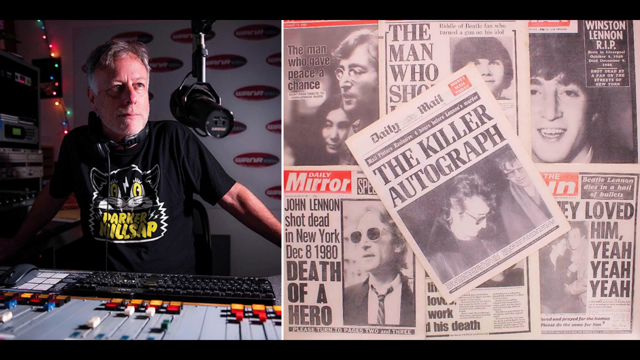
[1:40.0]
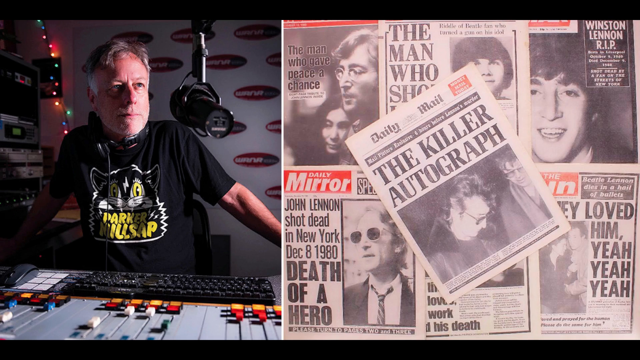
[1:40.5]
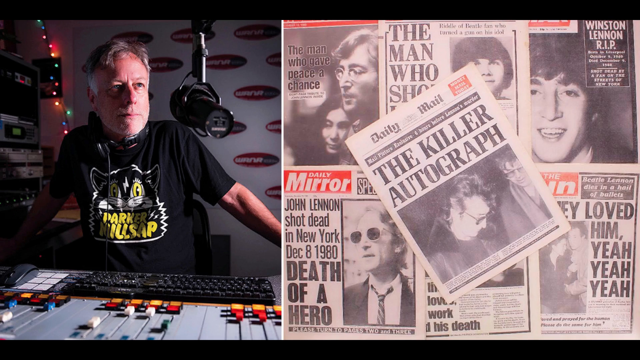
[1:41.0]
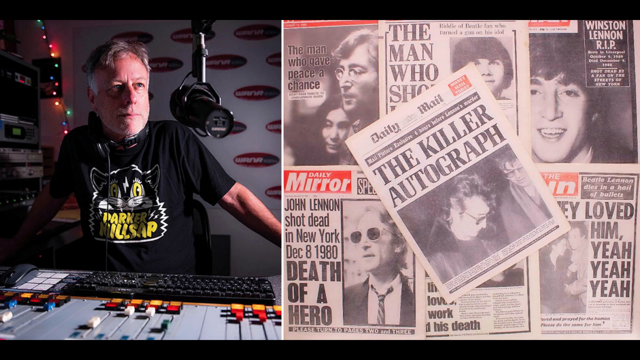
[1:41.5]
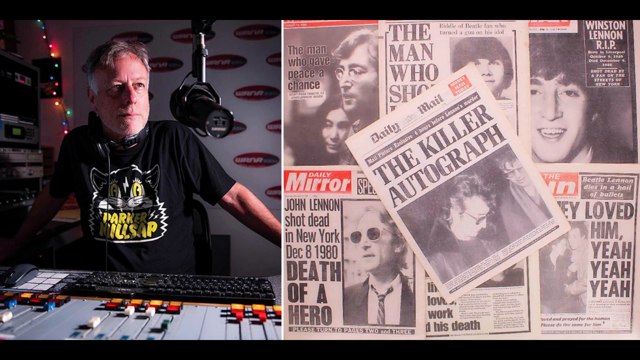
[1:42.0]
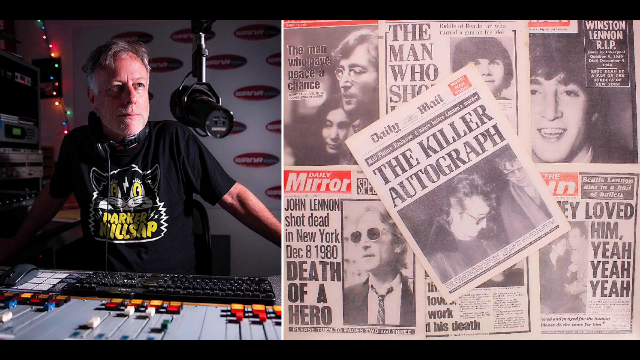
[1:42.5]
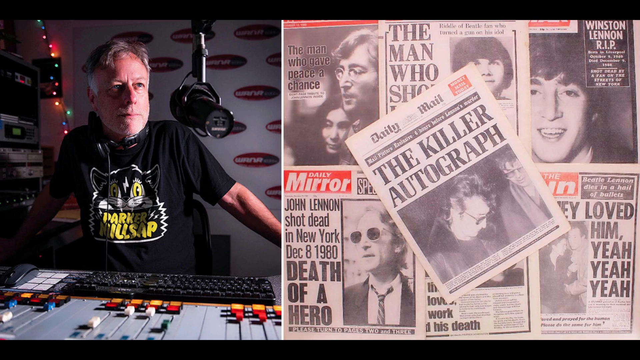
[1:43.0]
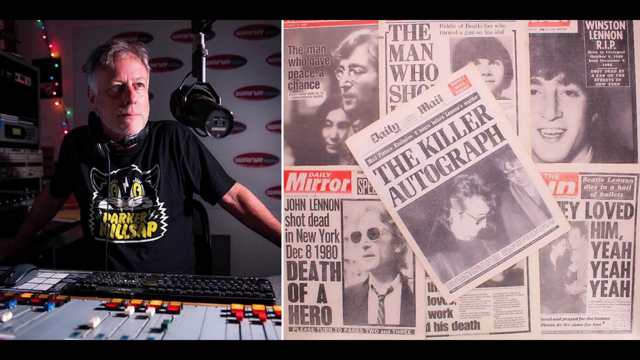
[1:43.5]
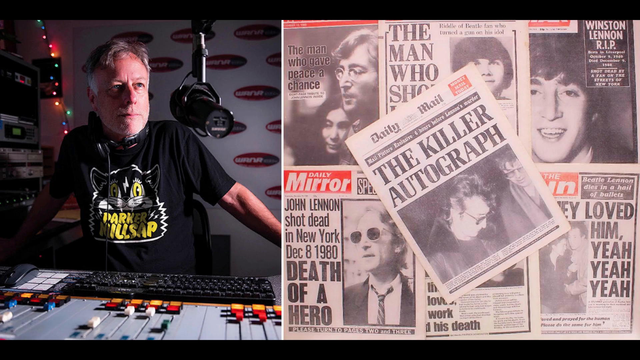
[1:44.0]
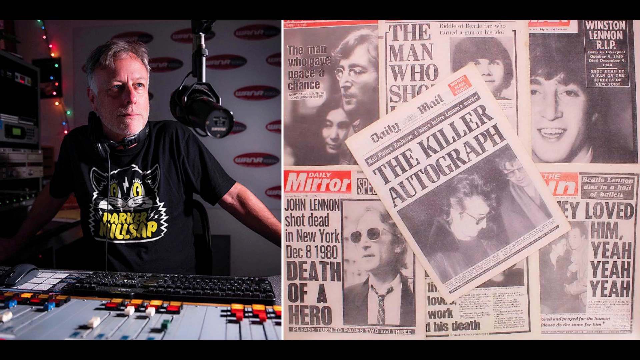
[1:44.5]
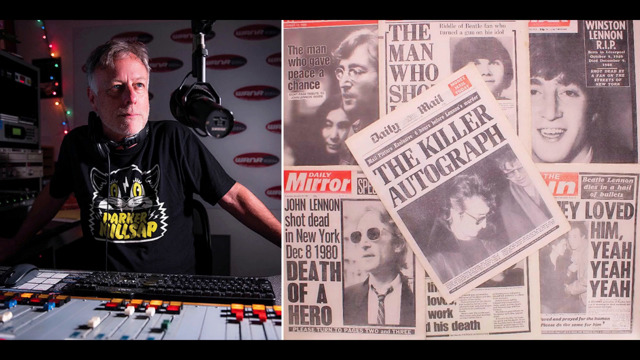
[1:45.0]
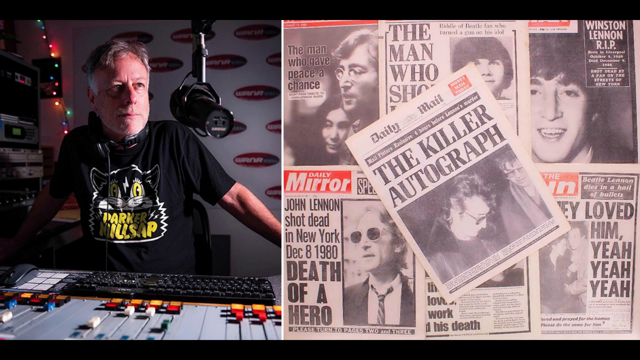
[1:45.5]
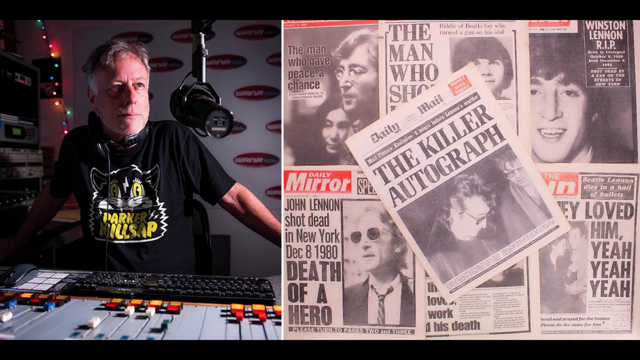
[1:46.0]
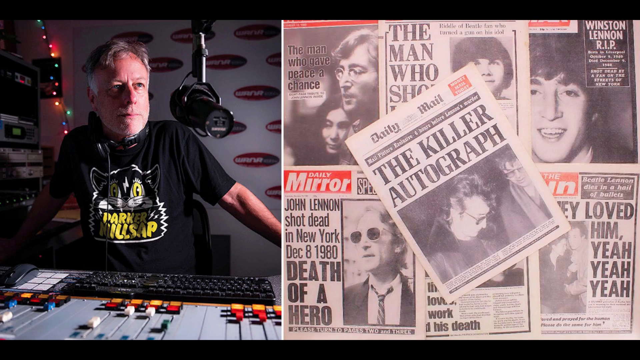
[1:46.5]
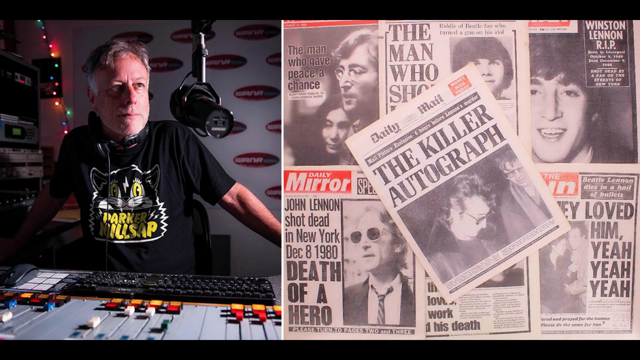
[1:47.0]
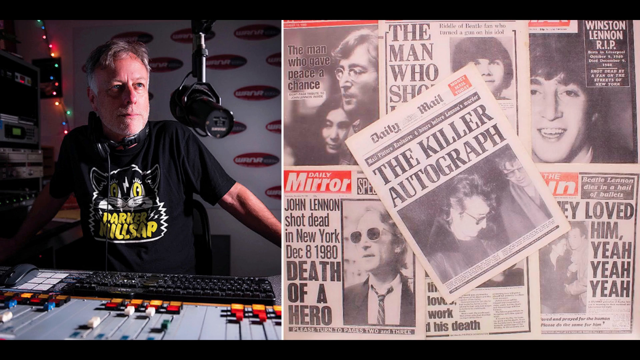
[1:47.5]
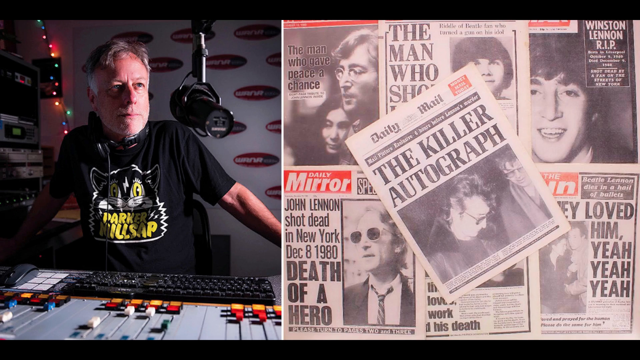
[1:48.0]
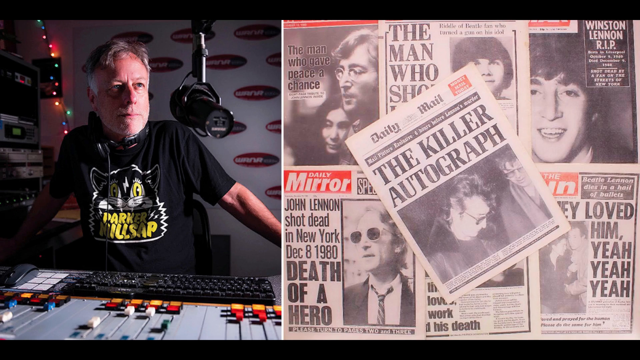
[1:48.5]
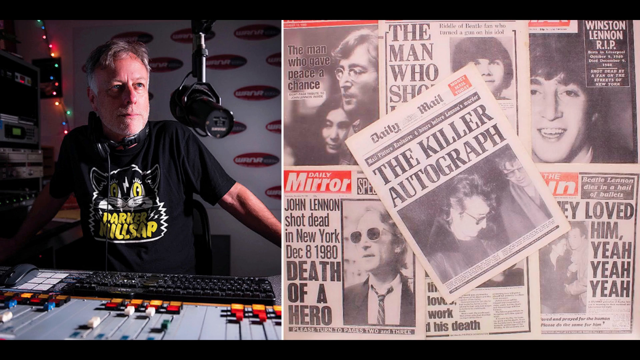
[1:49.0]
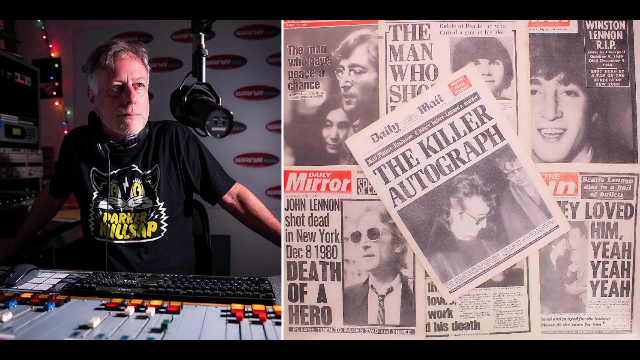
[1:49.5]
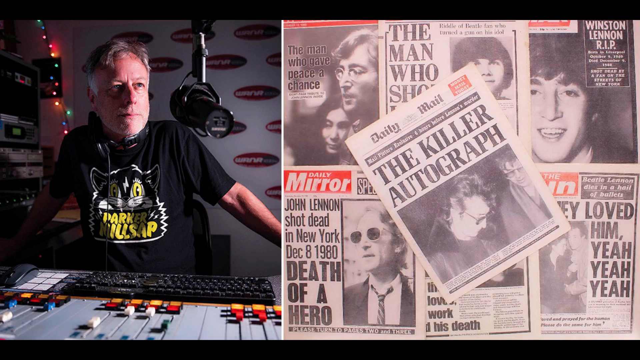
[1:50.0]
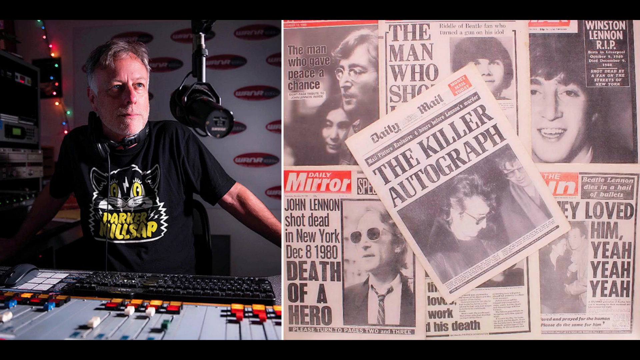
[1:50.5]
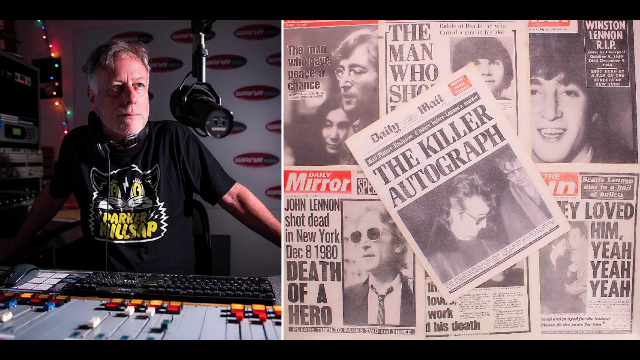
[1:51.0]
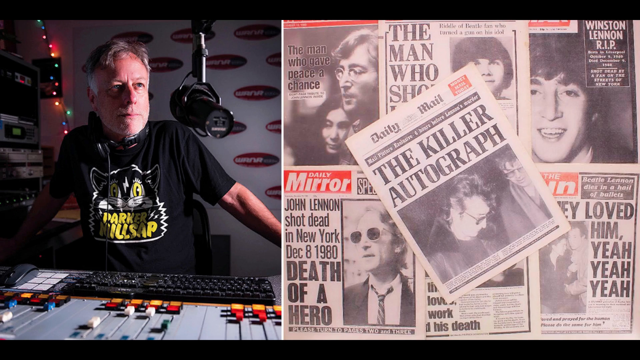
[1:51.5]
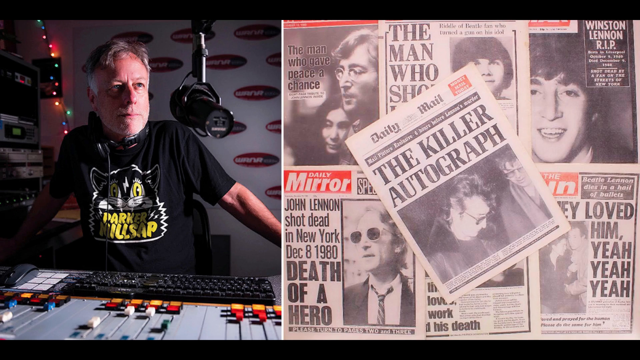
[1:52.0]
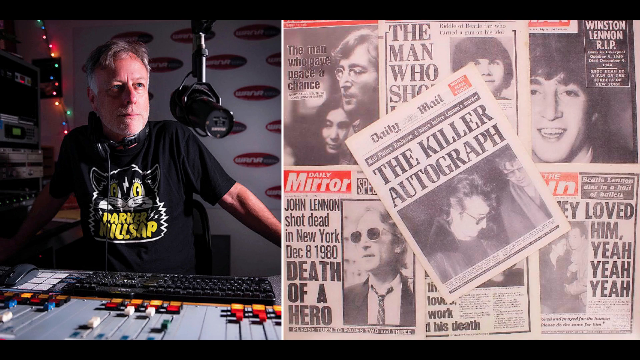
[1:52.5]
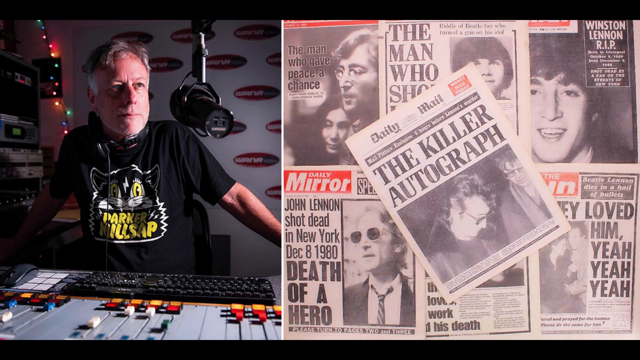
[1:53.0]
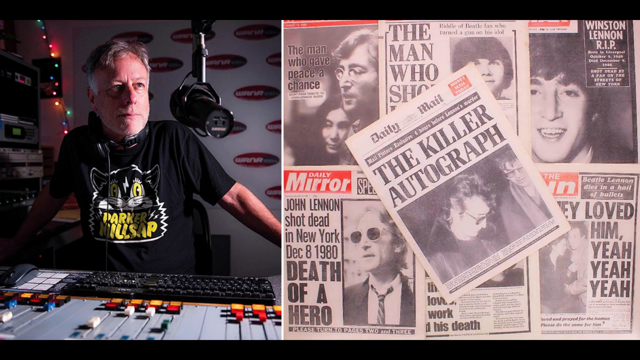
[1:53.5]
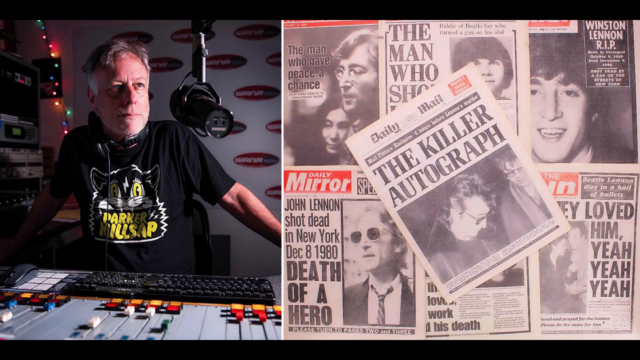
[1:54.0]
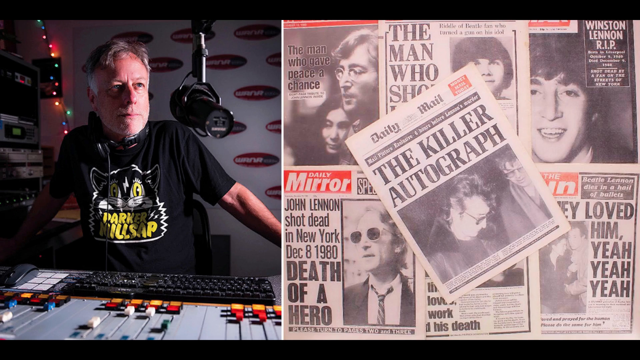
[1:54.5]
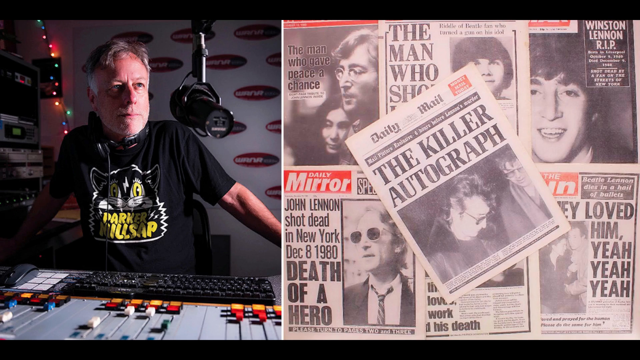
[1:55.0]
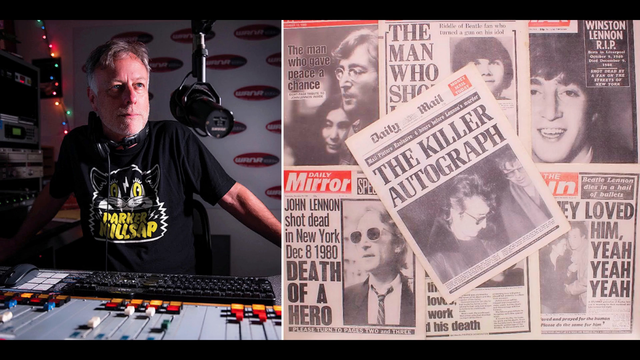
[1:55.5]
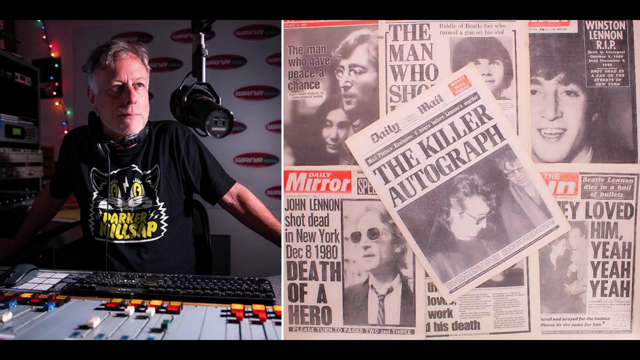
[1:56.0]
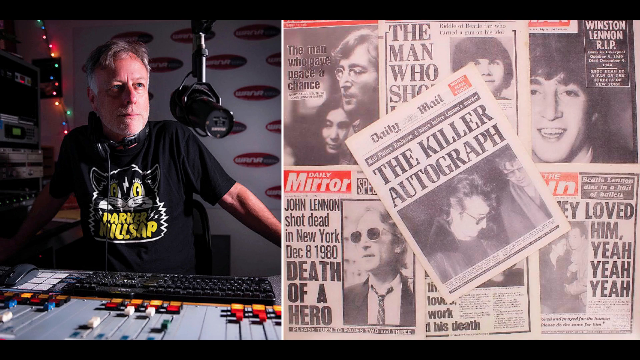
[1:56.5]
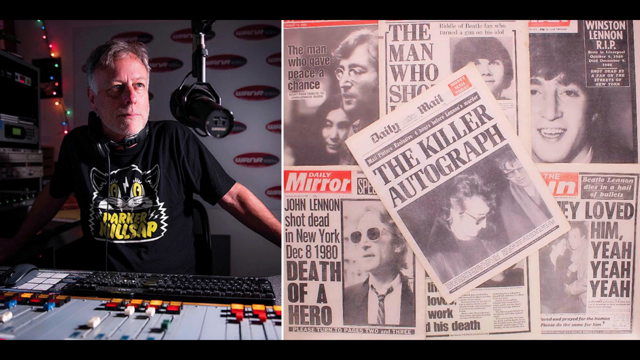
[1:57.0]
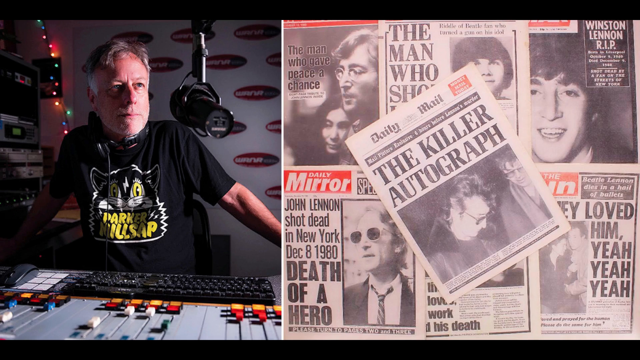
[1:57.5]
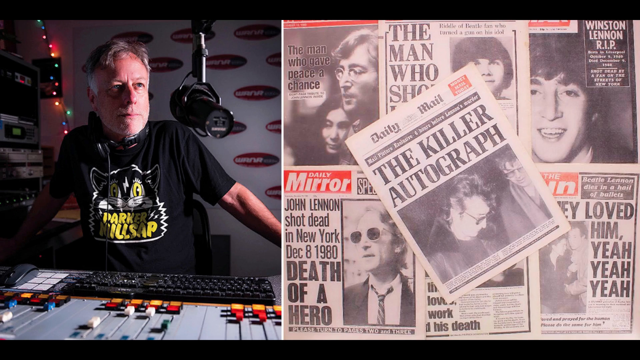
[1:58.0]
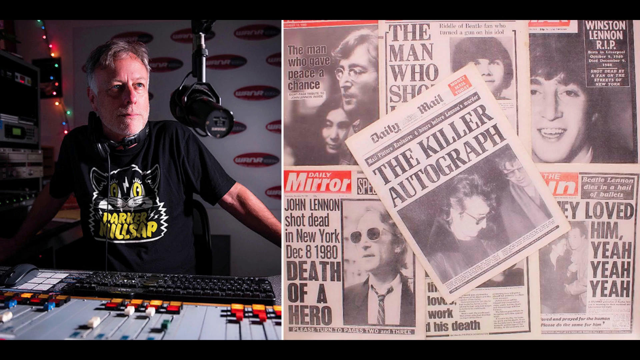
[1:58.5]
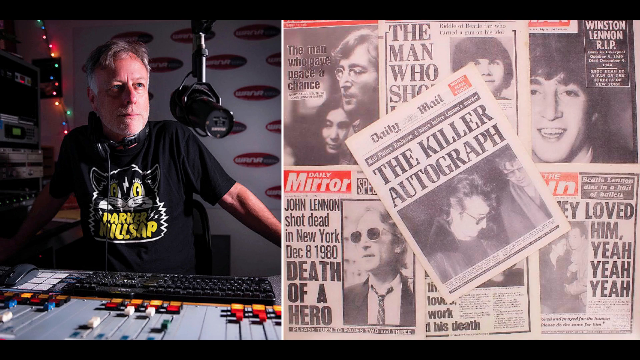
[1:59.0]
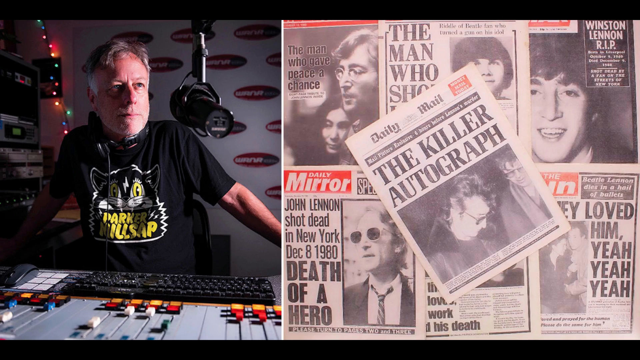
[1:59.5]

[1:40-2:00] The still image continues, with the radio DJ on the left and the newspaper layout on the right. The top portions of the newspapers are kind of hidden, so the publication of the top-left paper cannot be seen. It has a picture of John Lennon with Yoko Ono in a kind of side profile view, with John Lennon facing to the left. He wears his signature glasses and has long, light-colored hair; his mouth is partially open and he is gazing off in a kind of melancholy way. Yoko Ono is to his left, with her cheek and the side of her head resting on John Lennon's chest. She has a look of satisfaction, almost sadness in a way, and is staring off in the same direction as John Lennon.